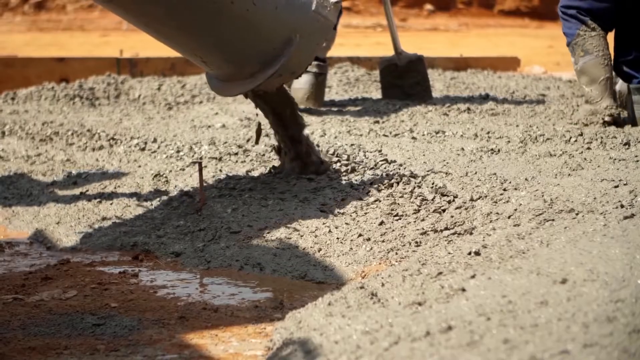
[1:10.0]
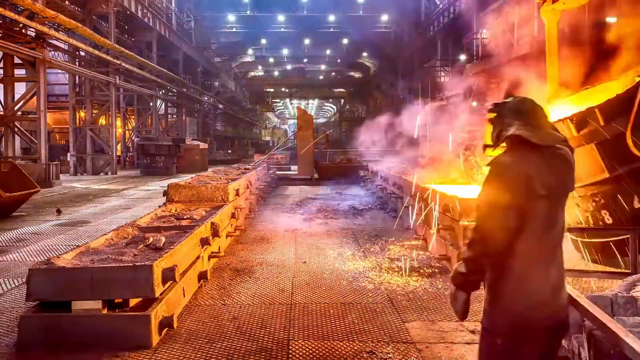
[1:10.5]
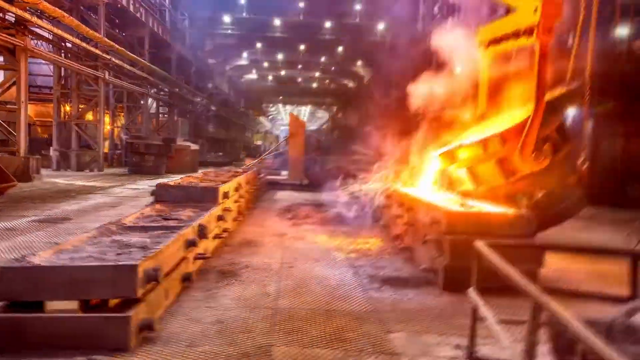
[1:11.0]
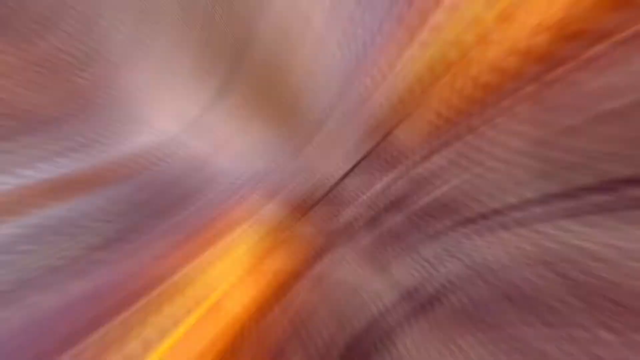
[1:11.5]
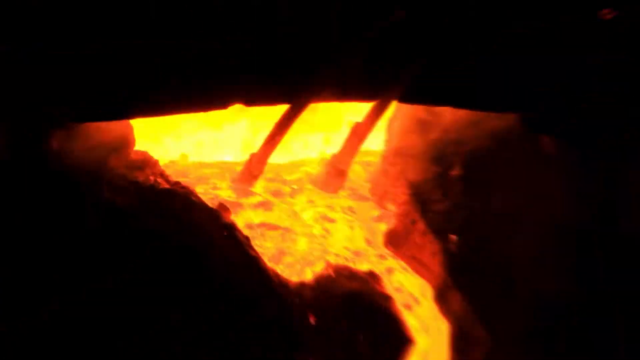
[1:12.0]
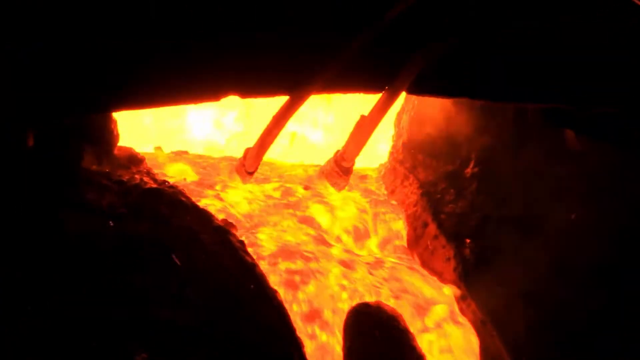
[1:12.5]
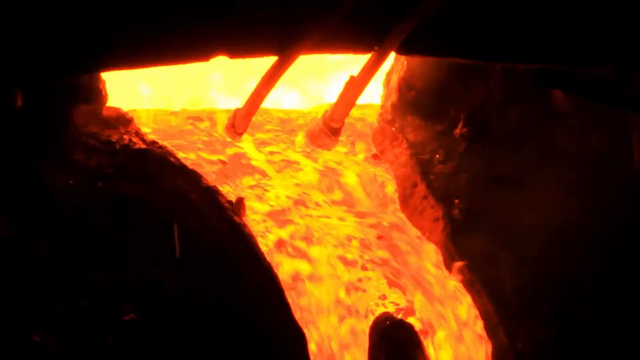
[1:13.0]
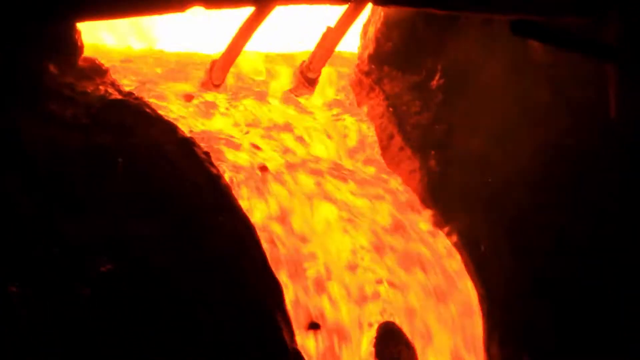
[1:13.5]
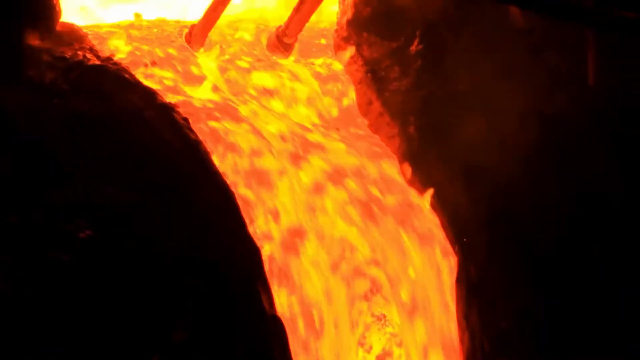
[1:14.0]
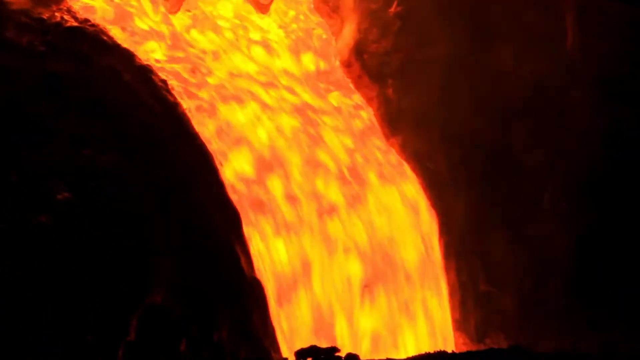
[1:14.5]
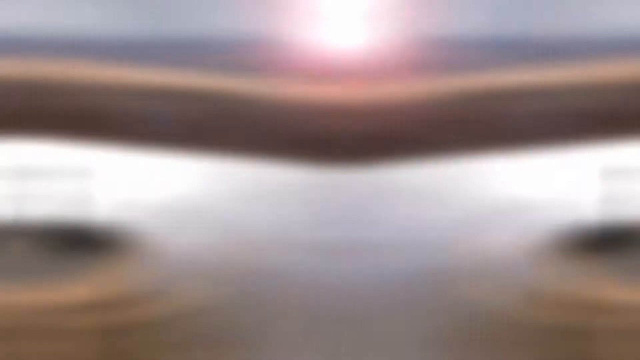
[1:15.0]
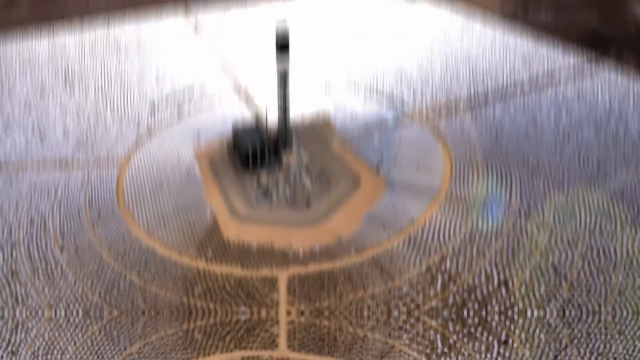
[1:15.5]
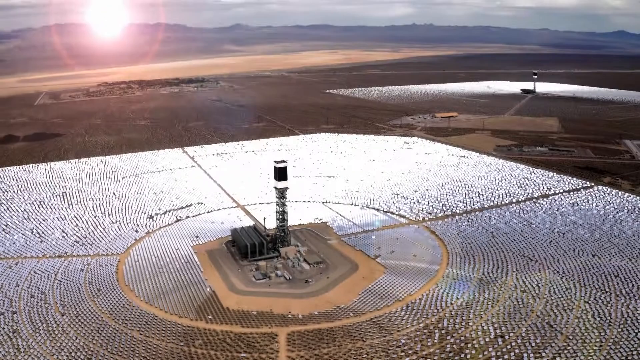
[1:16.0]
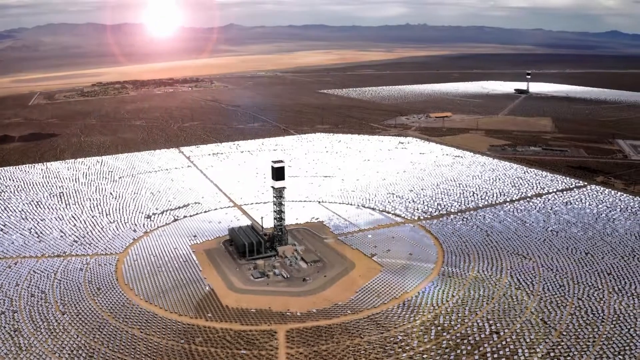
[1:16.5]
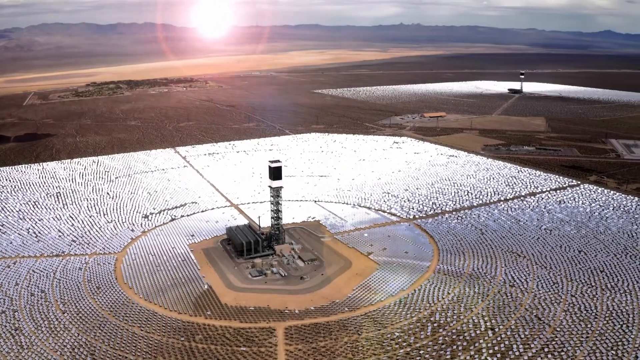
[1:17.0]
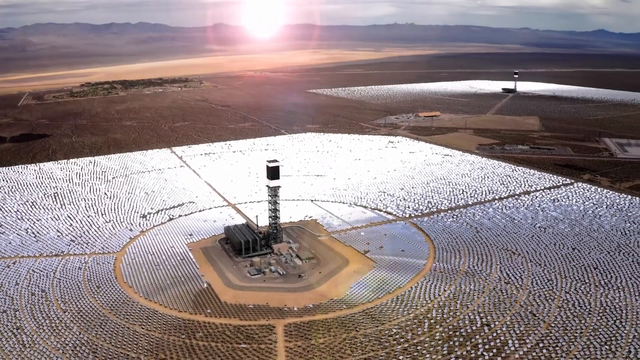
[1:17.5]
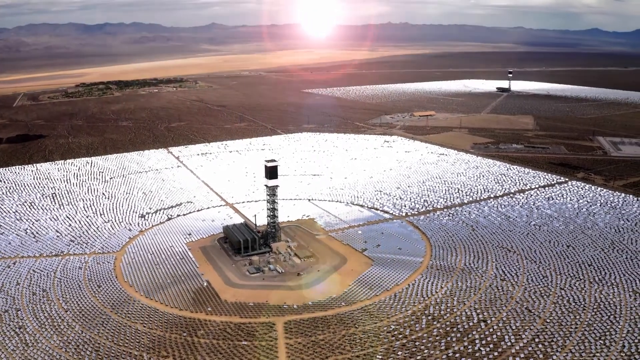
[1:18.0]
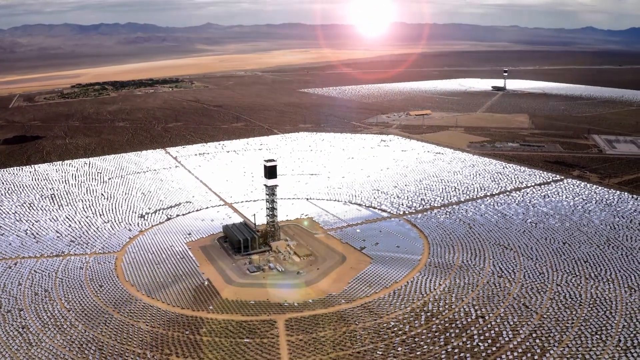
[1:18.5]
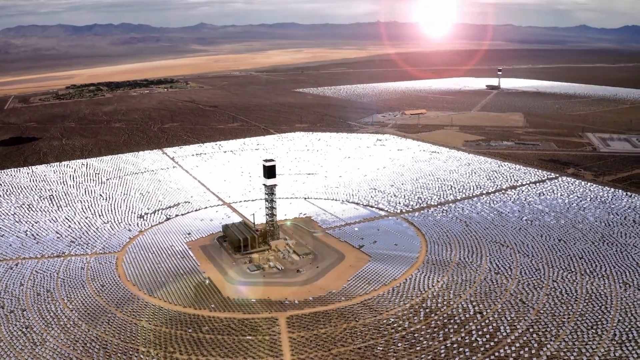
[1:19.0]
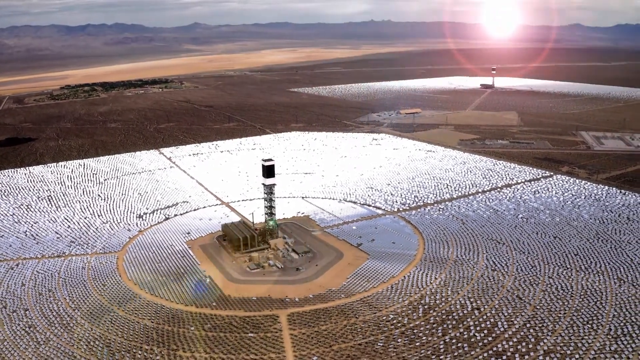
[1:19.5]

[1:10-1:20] Factories are shown where molten fire, resembling lava, is used in operations such as making cement.